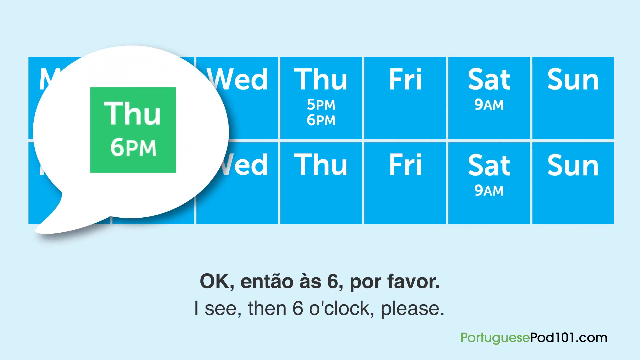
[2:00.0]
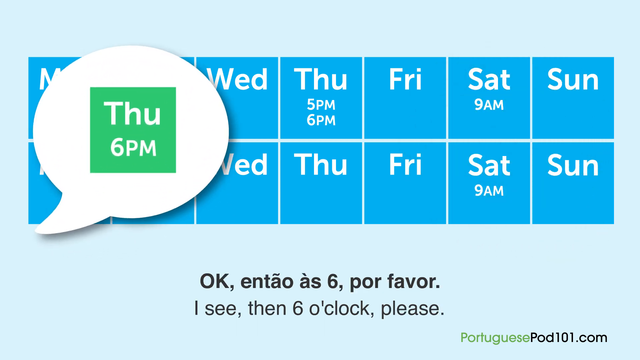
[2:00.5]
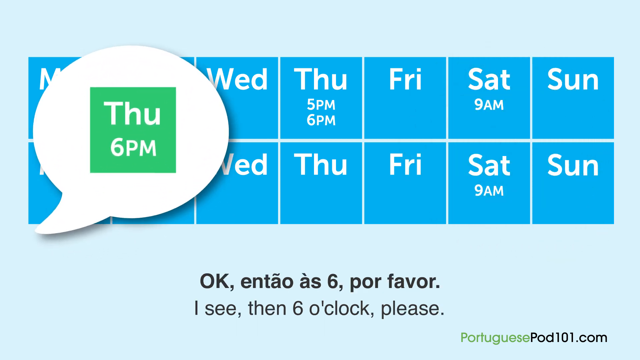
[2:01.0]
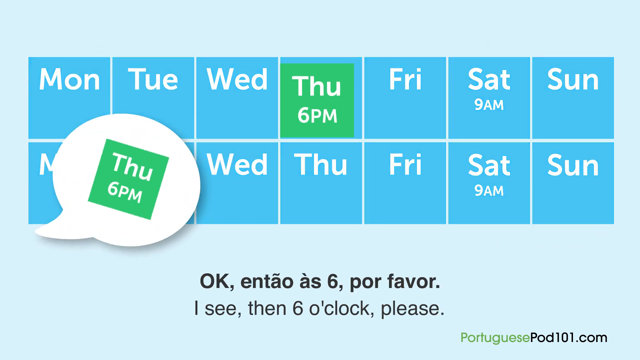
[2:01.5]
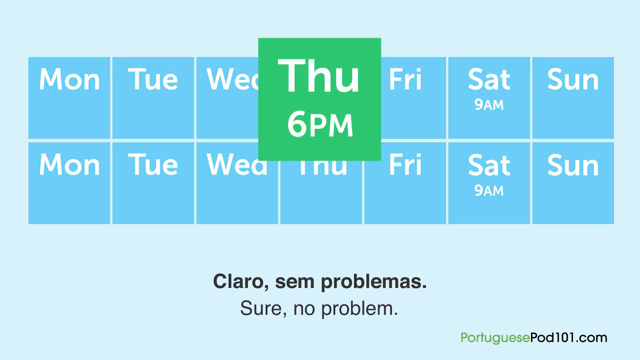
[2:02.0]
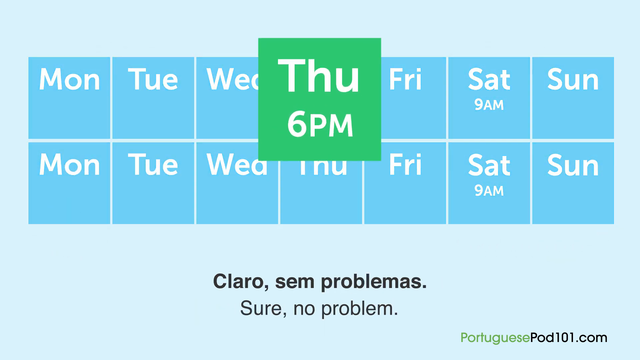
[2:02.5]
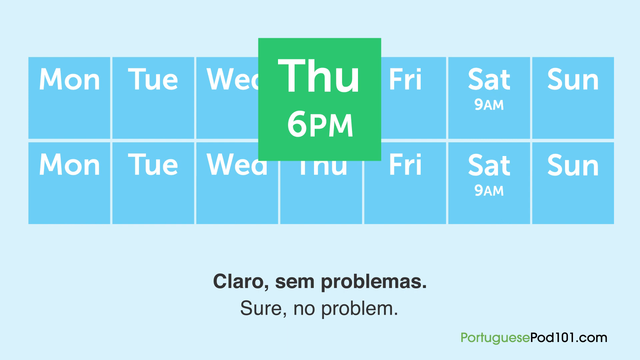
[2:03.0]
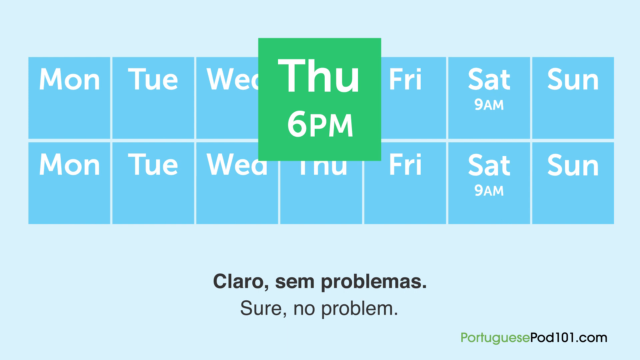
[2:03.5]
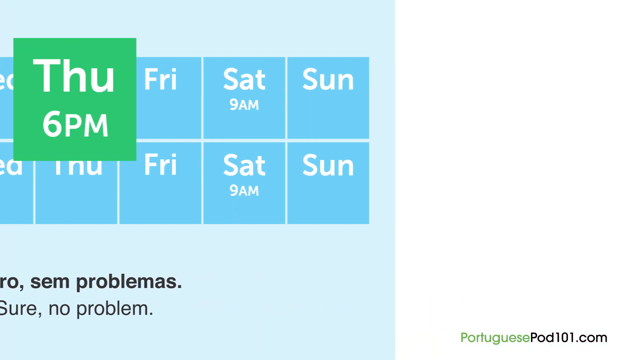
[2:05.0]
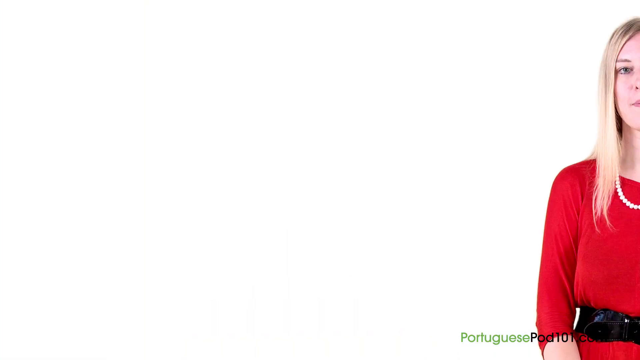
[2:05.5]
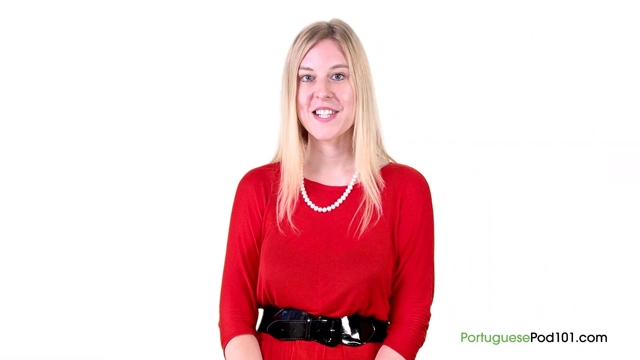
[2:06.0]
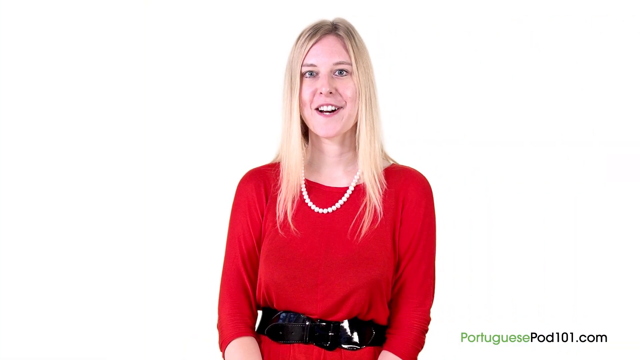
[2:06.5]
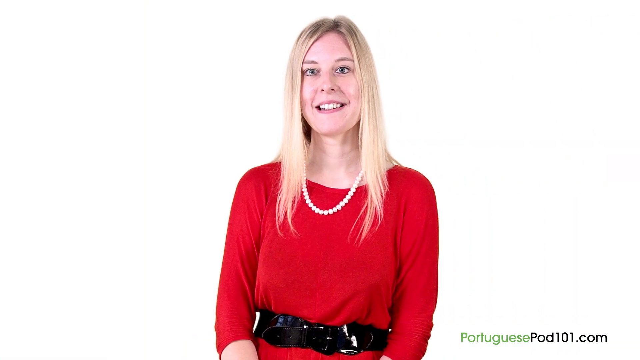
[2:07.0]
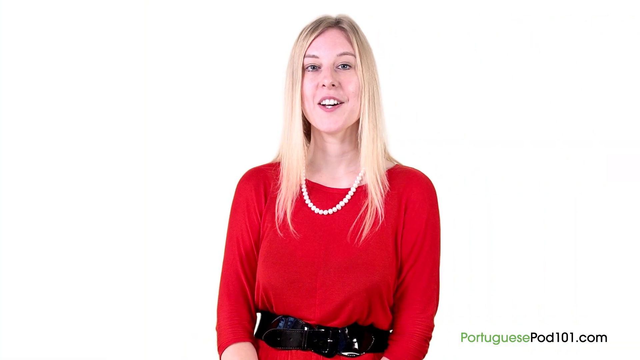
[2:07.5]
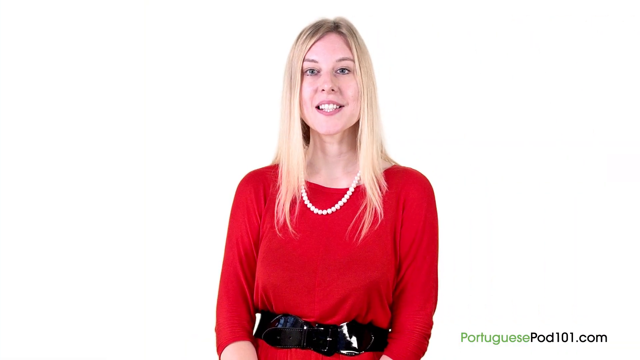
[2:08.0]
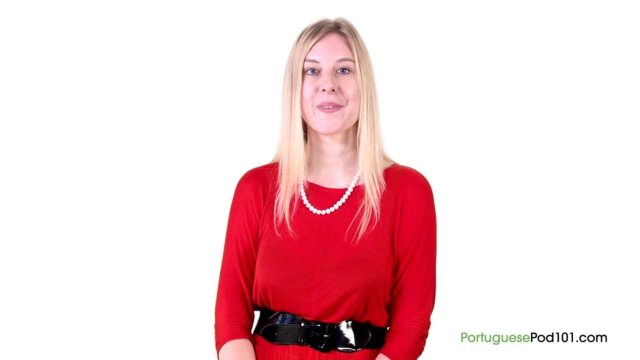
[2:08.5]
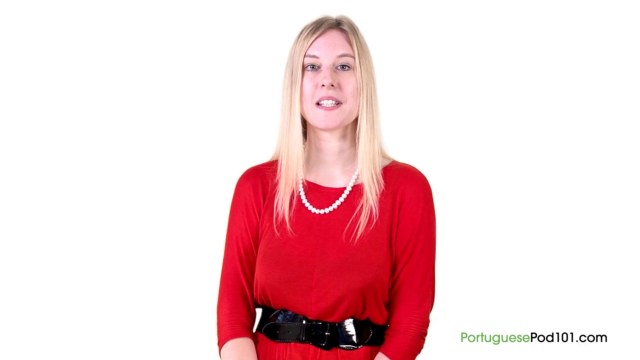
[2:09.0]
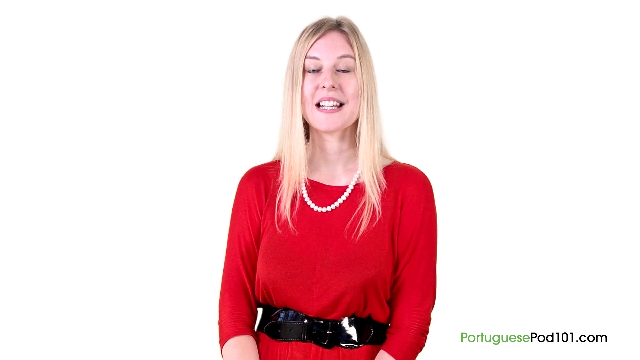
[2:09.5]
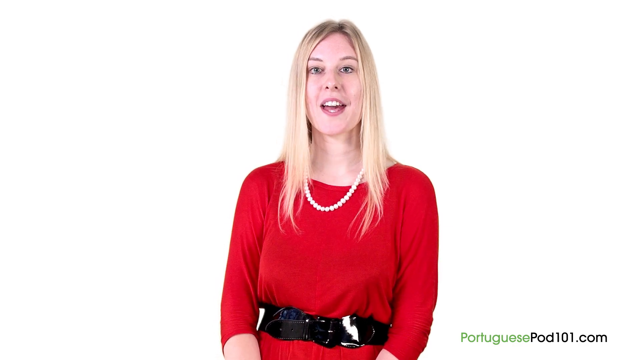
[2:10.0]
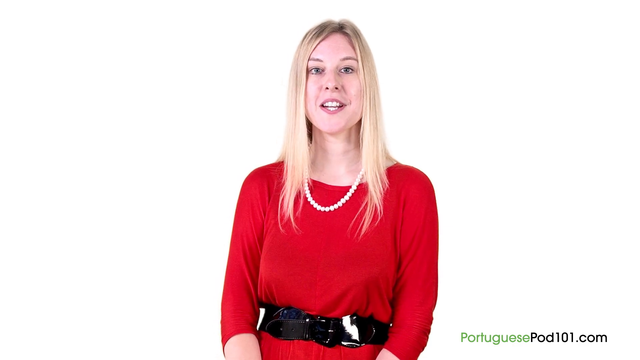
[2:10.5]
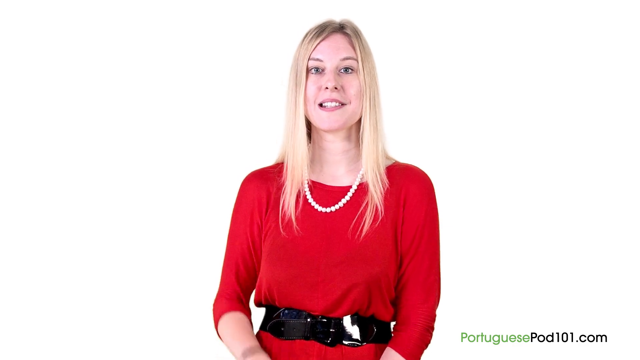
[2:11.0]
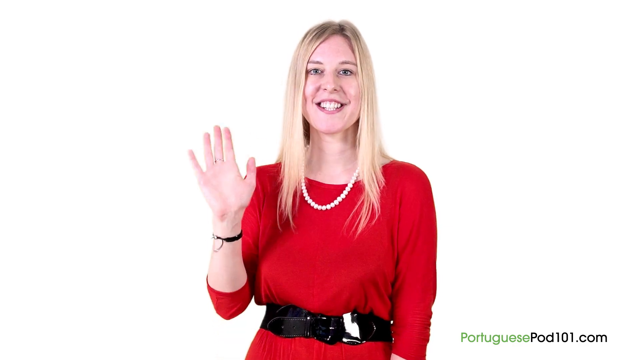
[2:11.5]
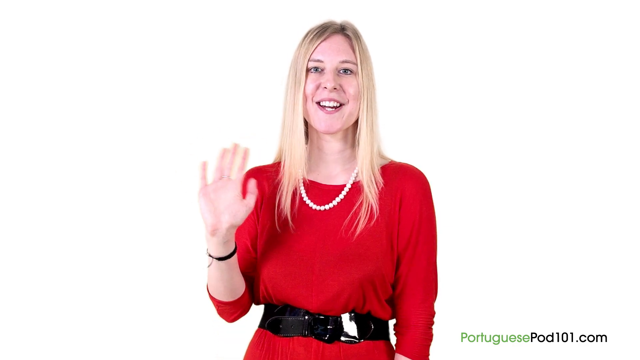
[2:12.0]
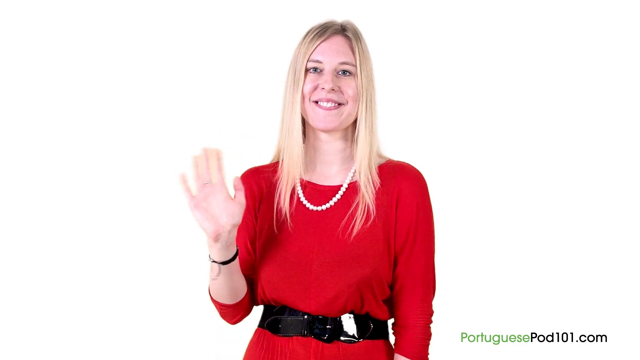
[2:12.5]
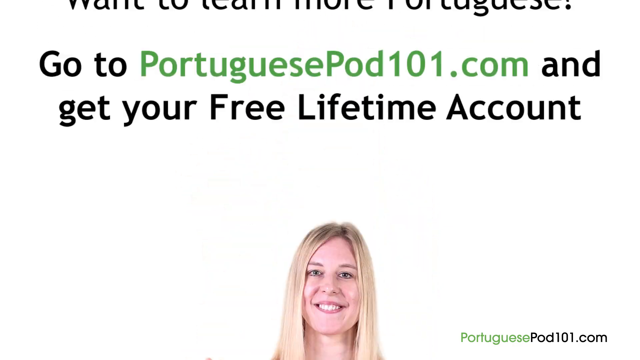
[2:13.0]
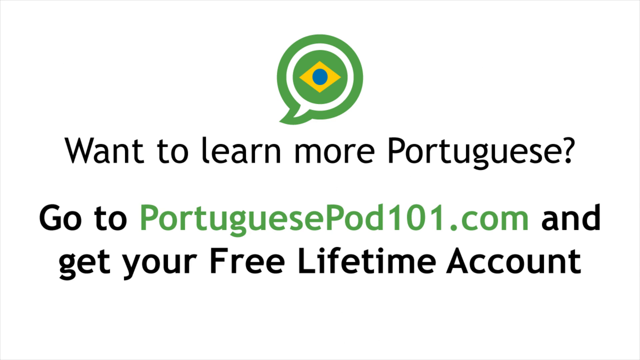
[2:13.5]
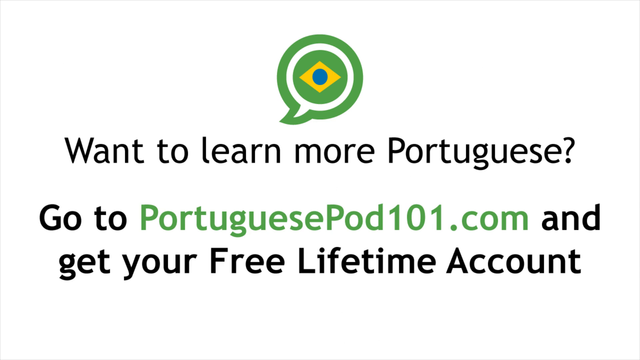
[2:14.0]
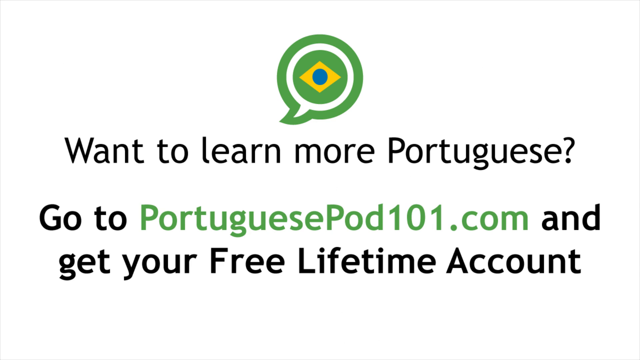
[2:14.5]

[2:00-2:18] A box highlighted in green shows a day that is available and that the client can make. The lady appears again, wearing a red shirt, with blonde hair and a white necklace. She waves her hand slowly four or five times to say bye to the audience. Another screen then asks if people want to learn more Portuguese and where to go to get a free lifetime account. A logo appears with a blue circle in the middle, a yellow diamond outside the blue circle, a green circle outside the yellow diamond, a white circle outside that green circle, and a bigger green circle outside the white circle, the logo of her business.